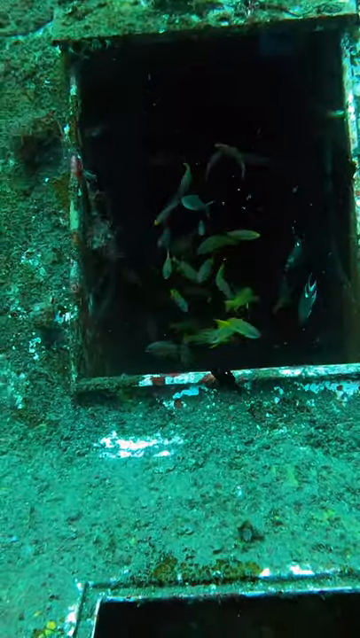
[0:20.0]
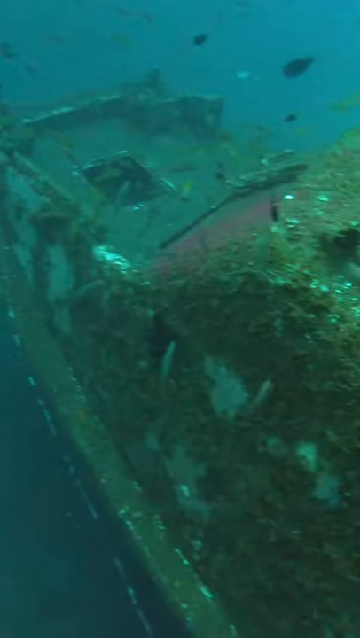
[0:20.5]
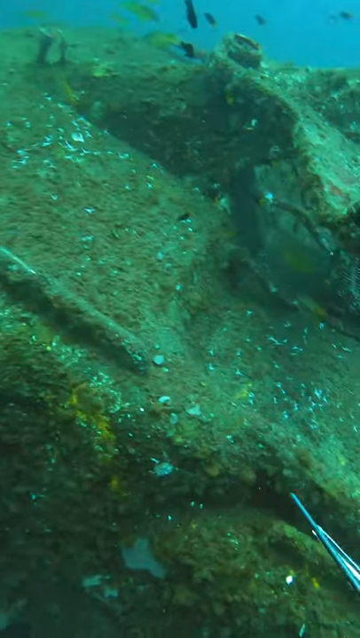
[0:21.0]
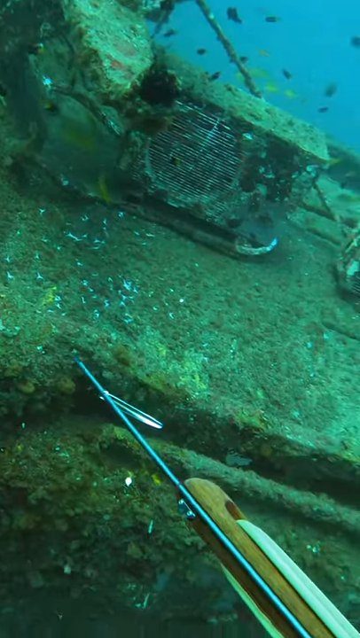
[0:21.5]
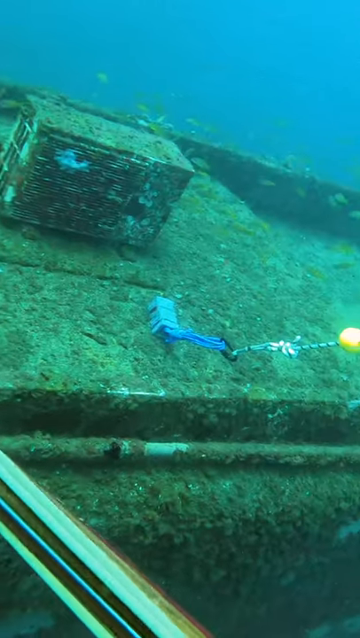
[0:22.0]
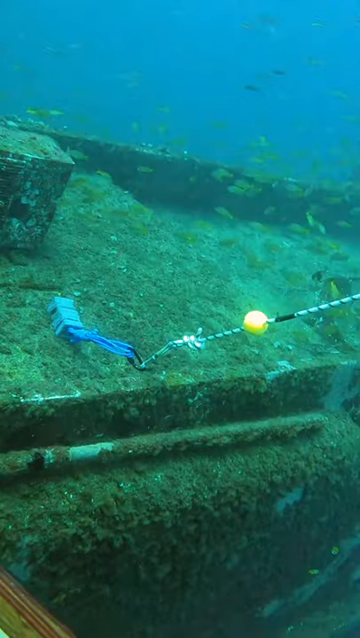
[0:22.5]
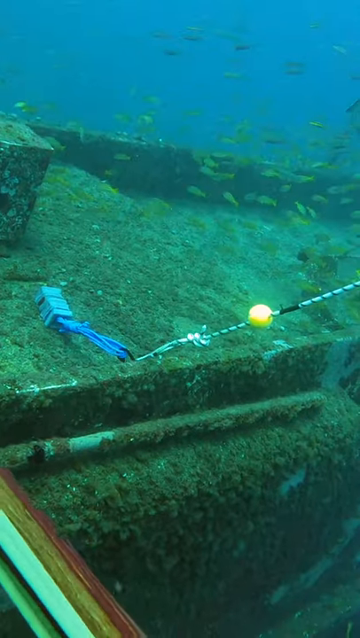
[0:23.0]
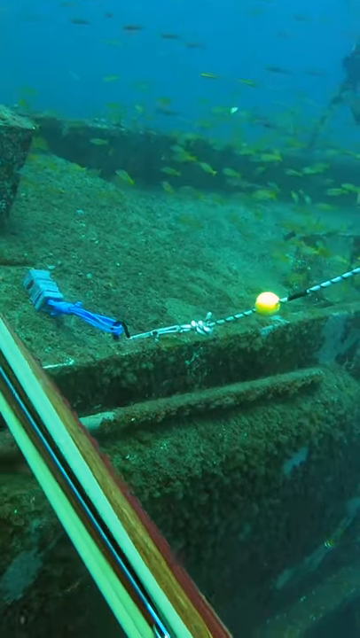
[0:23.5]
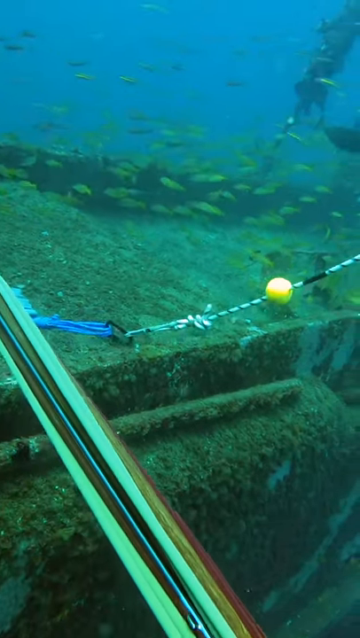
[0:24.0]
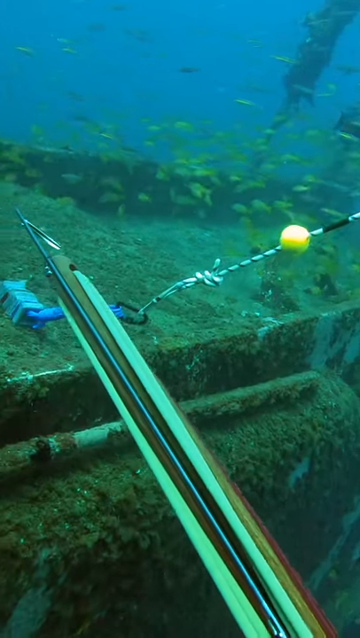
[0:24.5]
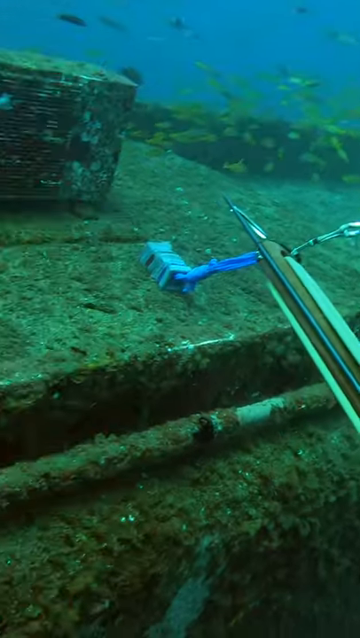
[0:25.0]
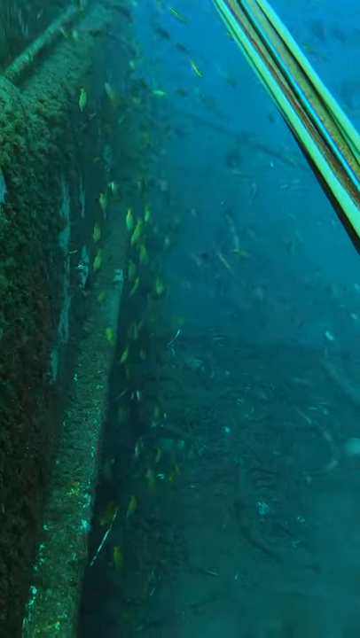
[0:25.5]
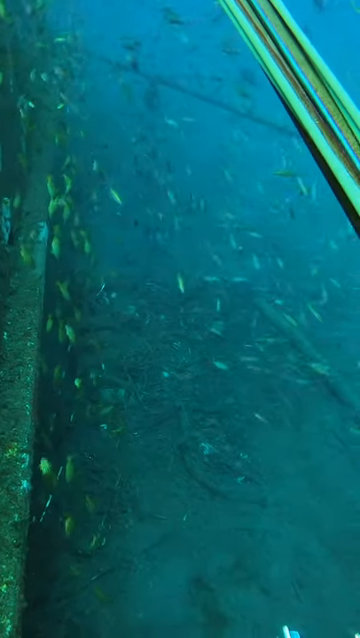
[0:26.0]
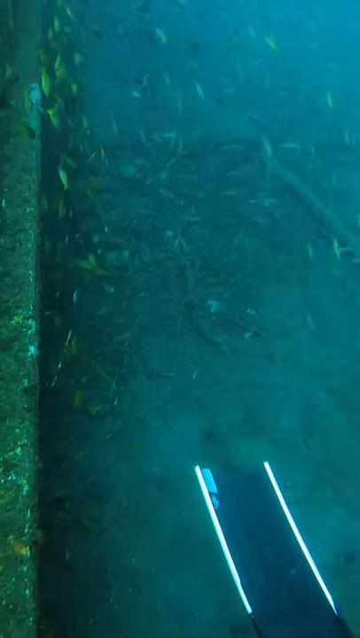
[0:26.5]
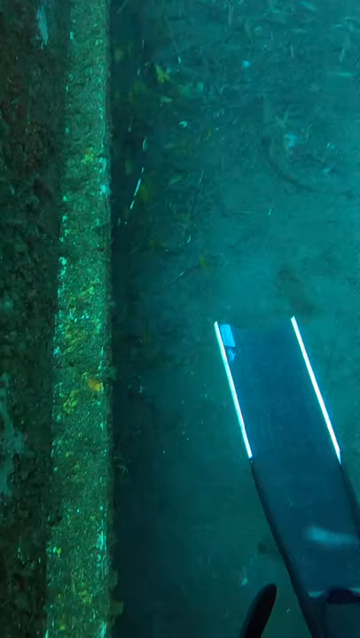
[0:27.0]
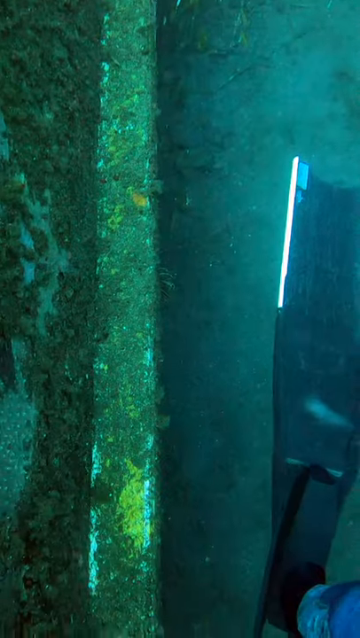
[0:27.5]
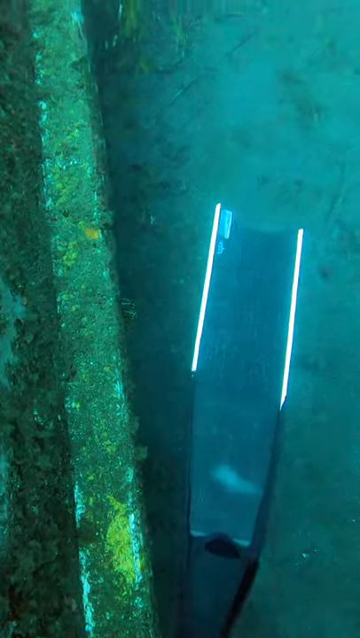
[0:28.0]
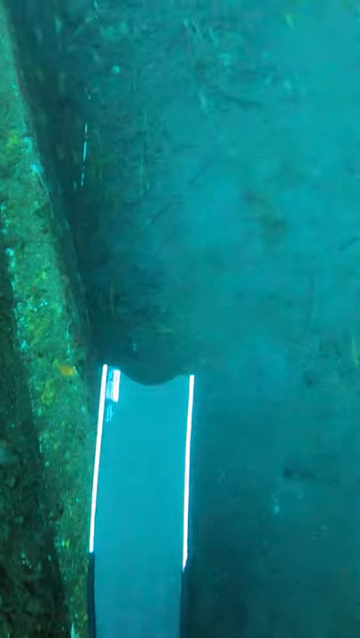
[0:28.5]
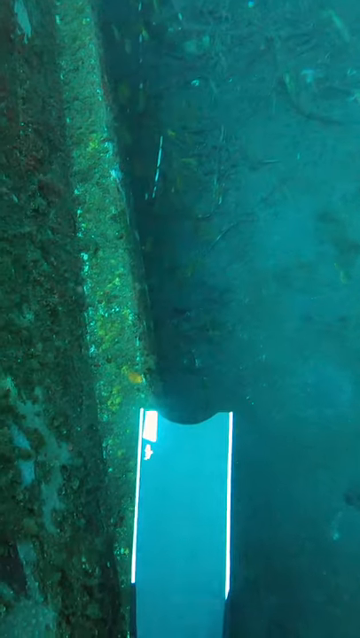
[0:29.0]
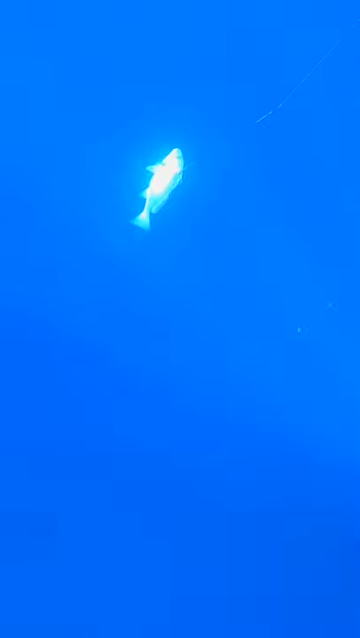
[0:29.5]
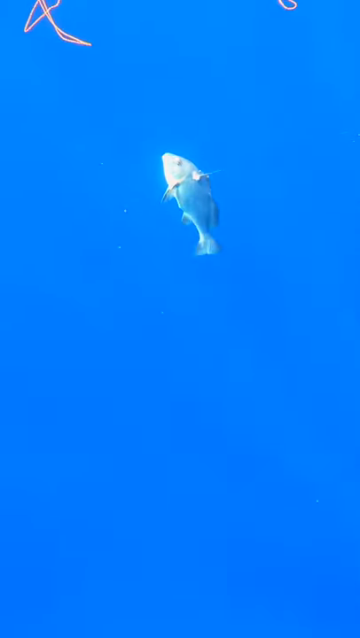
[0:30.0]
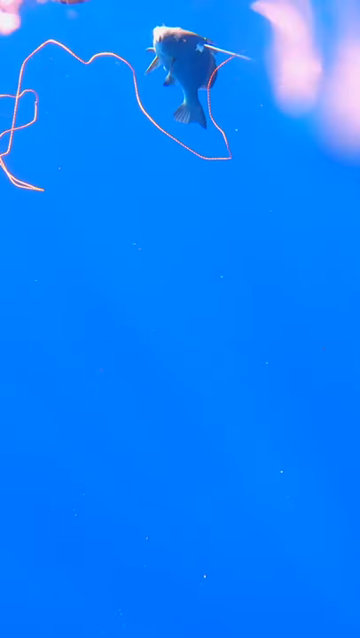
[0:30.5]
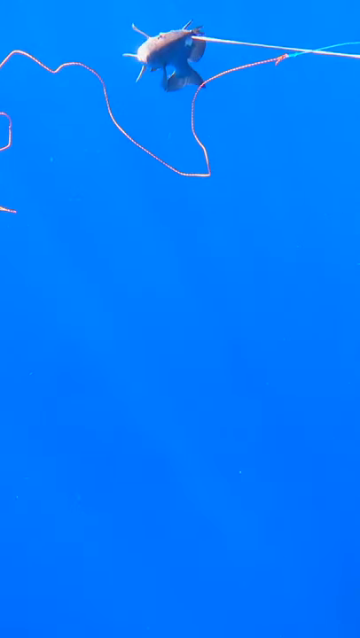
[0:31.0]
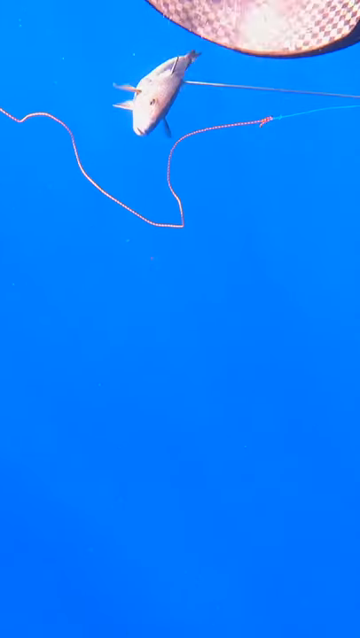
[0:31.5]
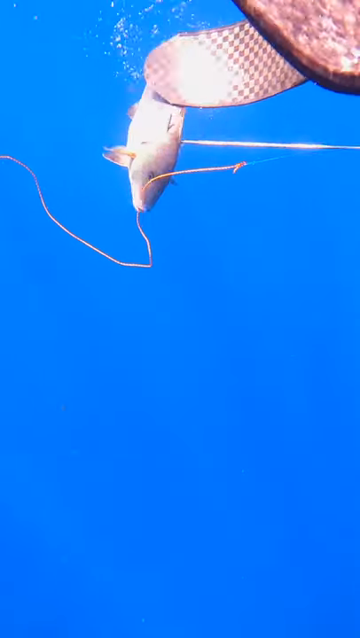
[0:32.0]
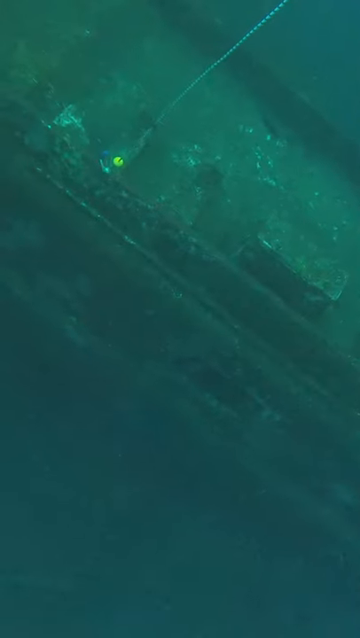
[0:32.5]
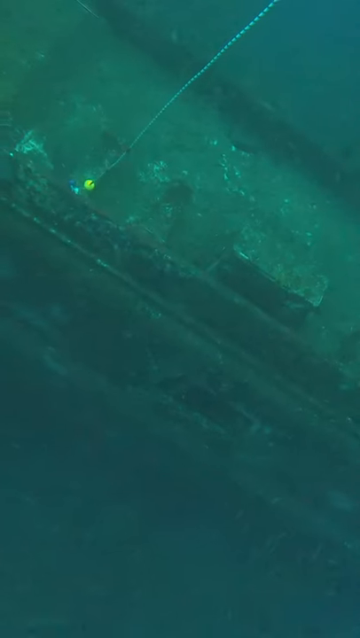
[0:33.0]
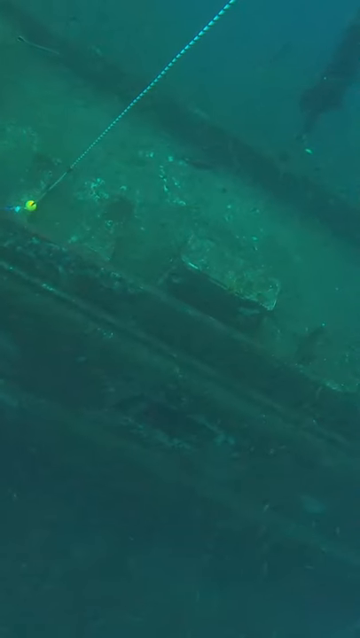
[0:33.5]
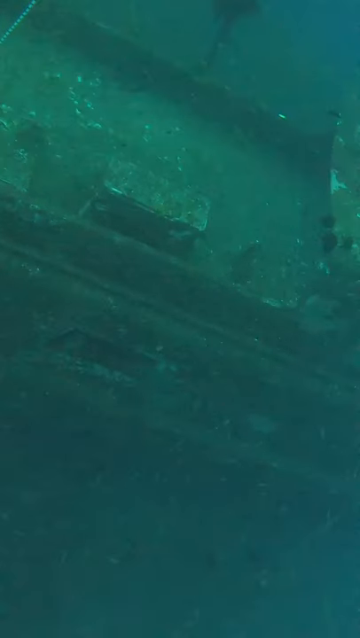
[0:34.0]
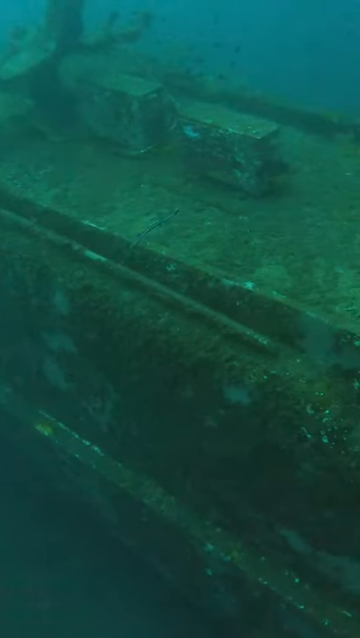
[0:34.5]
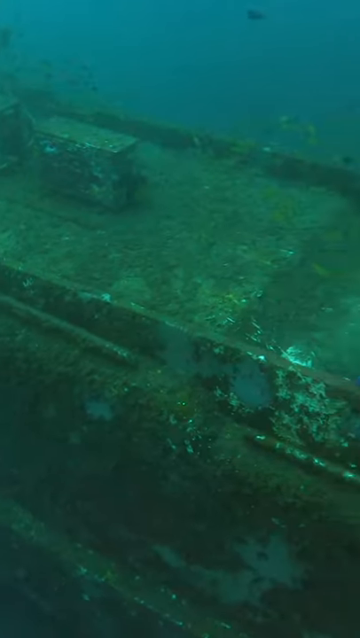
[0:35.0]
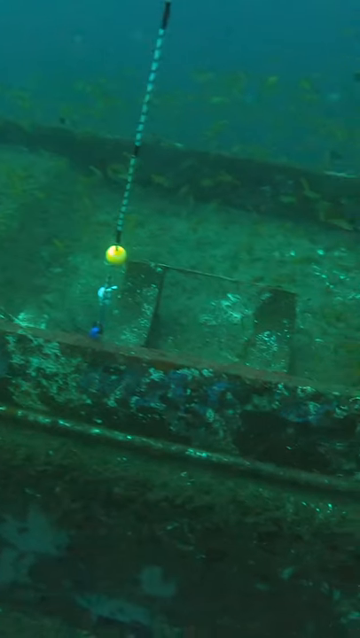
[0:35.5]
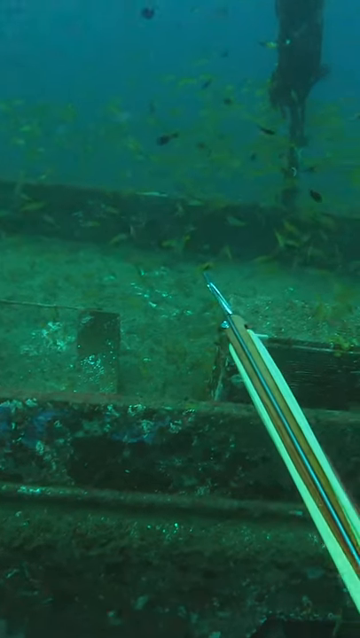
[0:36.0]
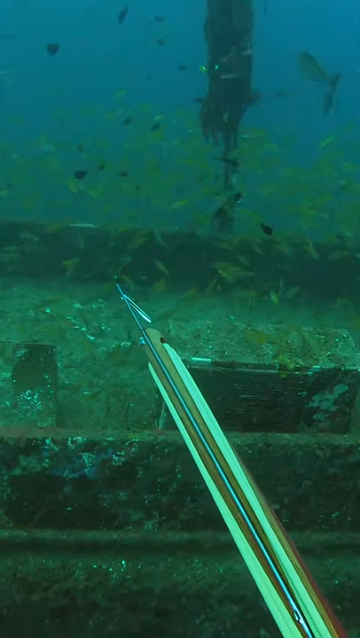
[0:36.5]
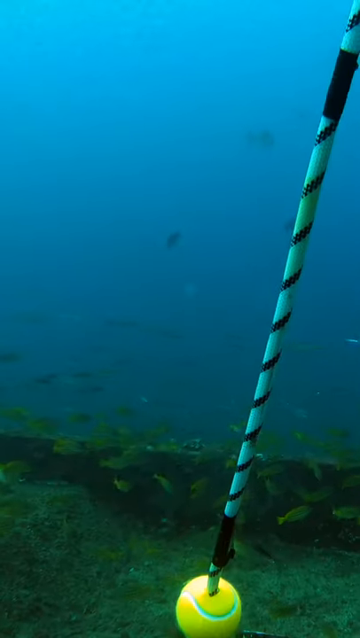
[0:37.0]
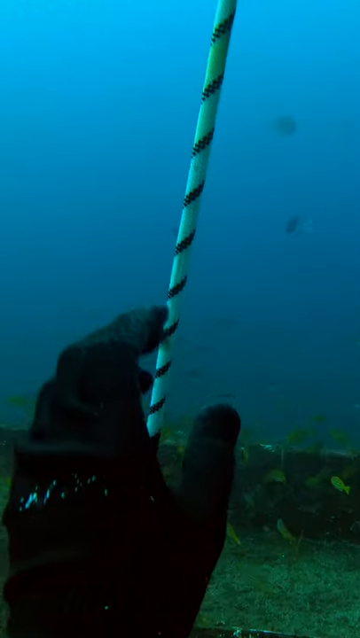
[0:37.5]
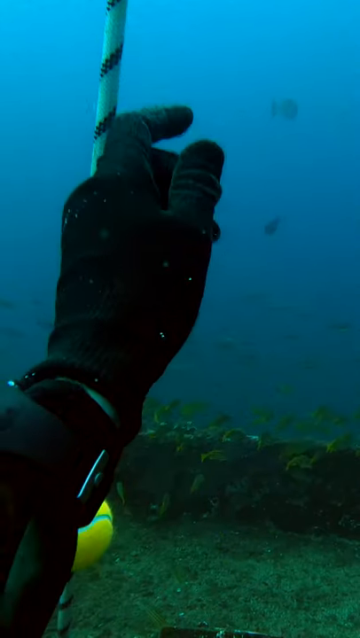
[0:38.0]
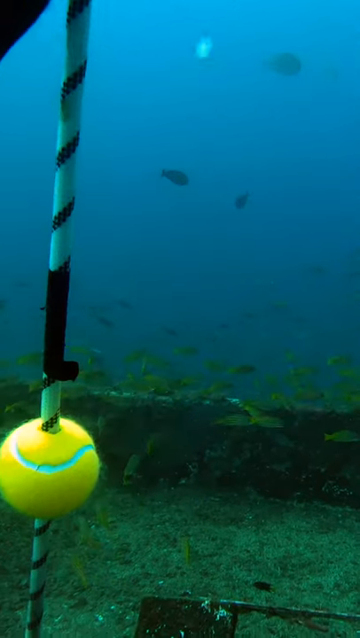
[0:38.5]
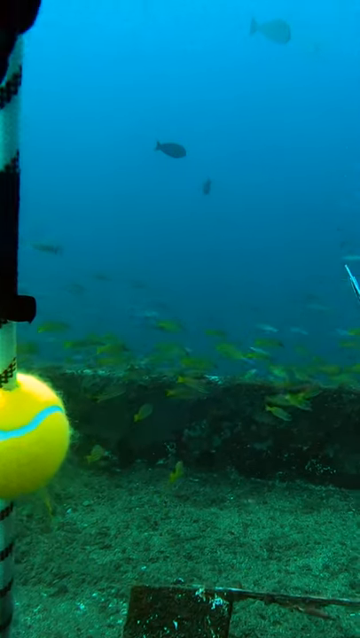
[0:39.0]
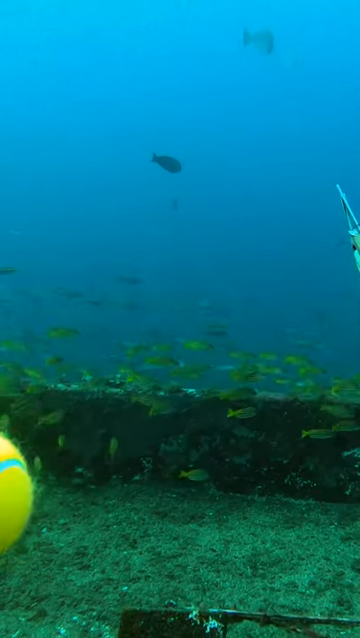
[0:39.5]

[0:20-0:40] The diver is now at the boat wreckage. Most of the footage appears to be from his perspective, as if he is holding the camera: the tip of his gun is visible and the camera kind of moves as he looks around. At one point he holds his dive rope, and a fish he has speared is kind of wiggling around after being hurt. At another point a small image or little graphic appears in a circle; it appears to be a frog diver, an illustration of some kind of frog human wearing goggles. The setting is in the water near the bottom, near the ship wreckage.